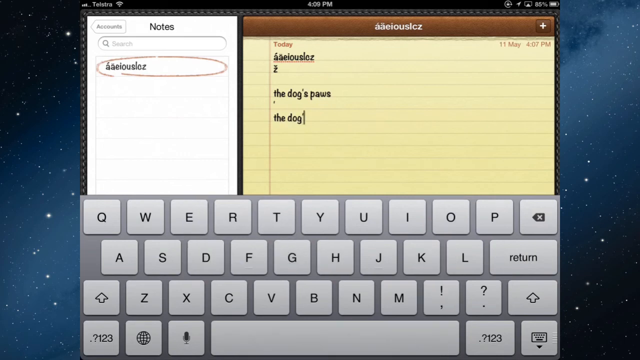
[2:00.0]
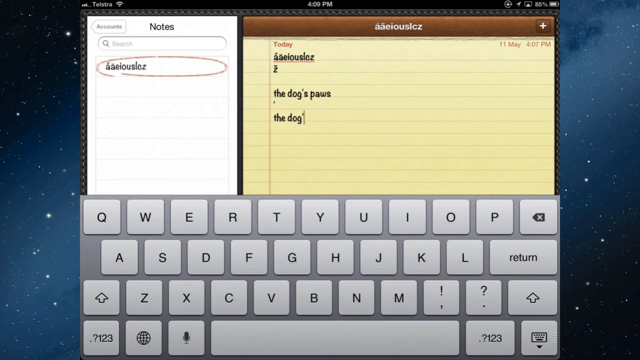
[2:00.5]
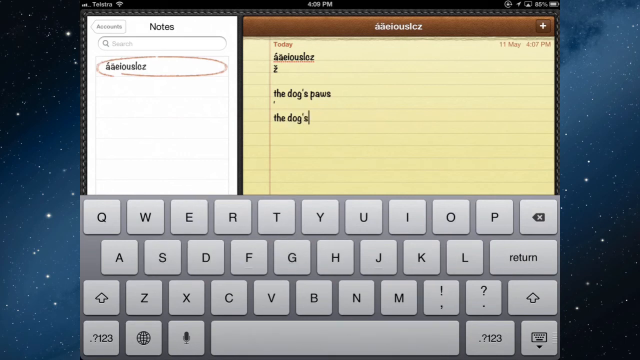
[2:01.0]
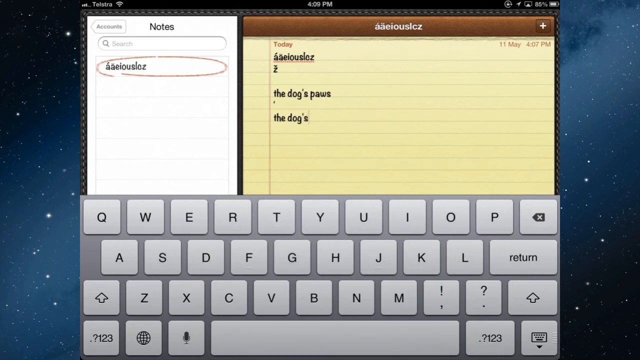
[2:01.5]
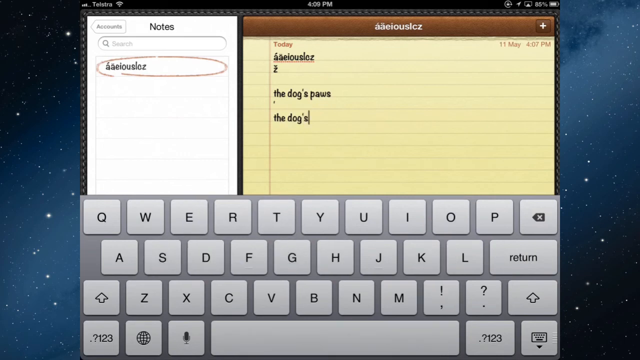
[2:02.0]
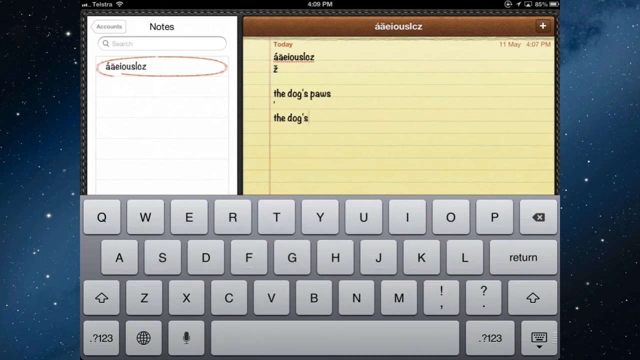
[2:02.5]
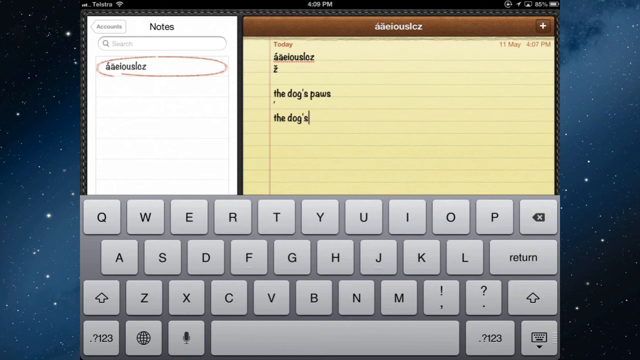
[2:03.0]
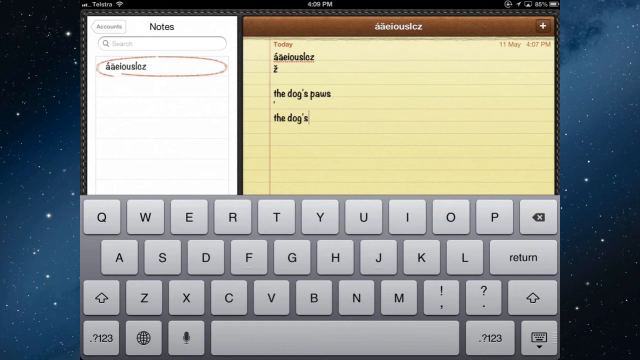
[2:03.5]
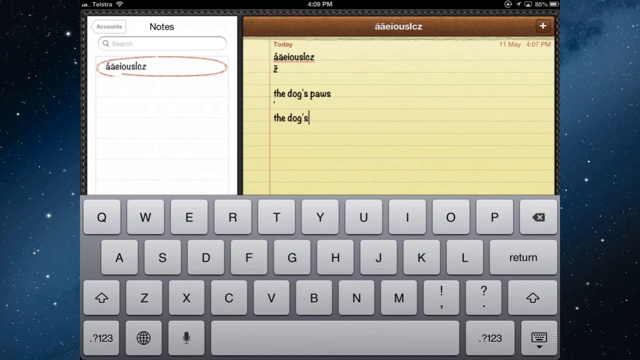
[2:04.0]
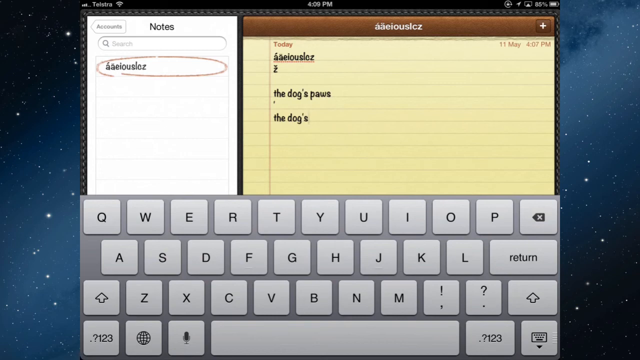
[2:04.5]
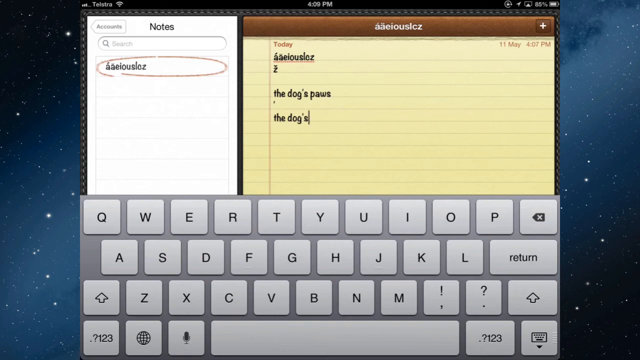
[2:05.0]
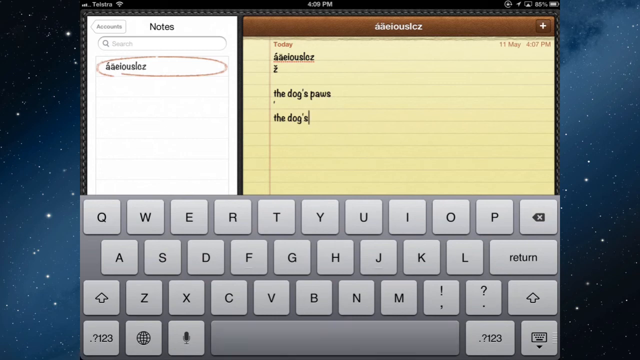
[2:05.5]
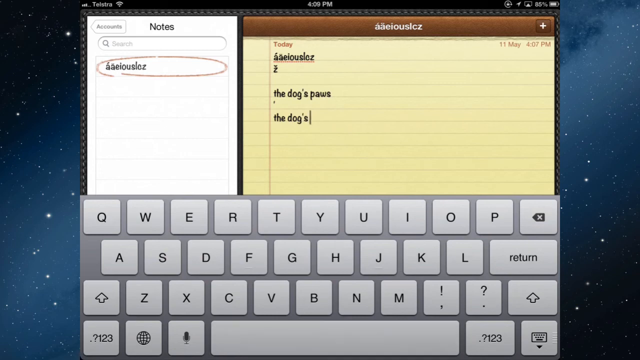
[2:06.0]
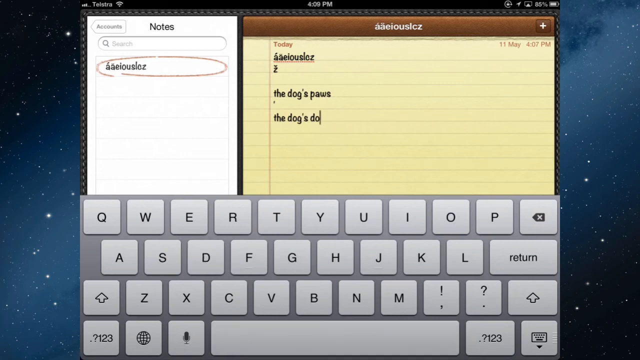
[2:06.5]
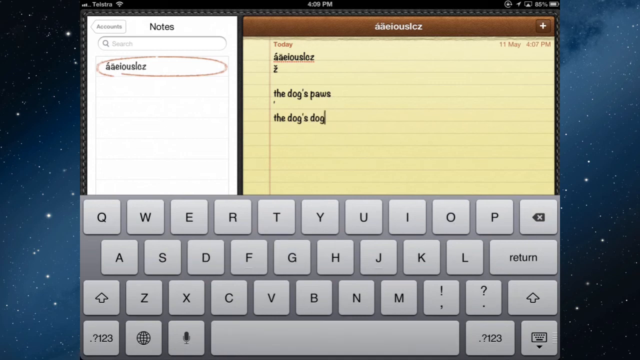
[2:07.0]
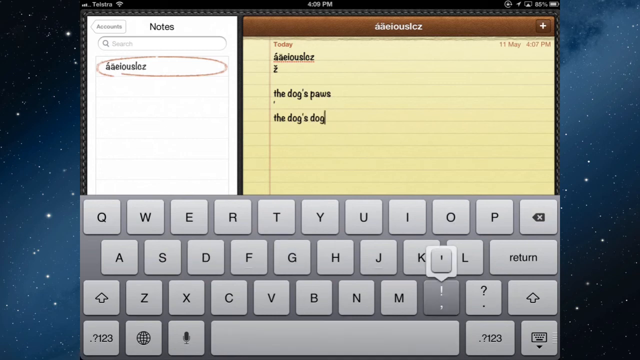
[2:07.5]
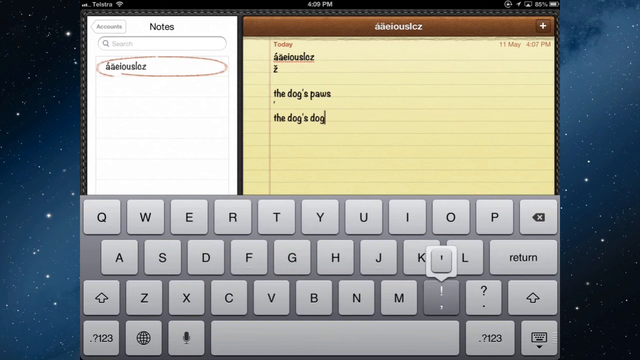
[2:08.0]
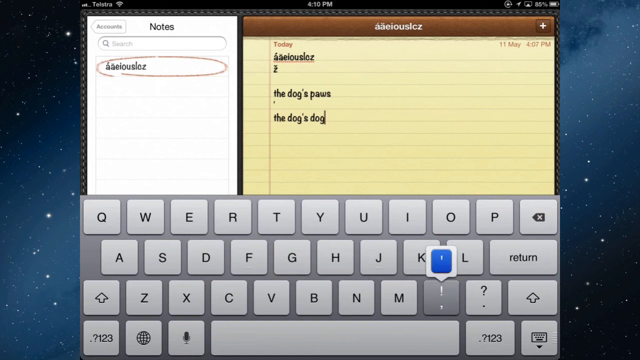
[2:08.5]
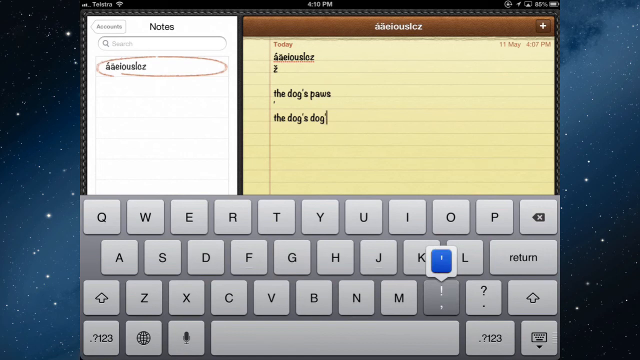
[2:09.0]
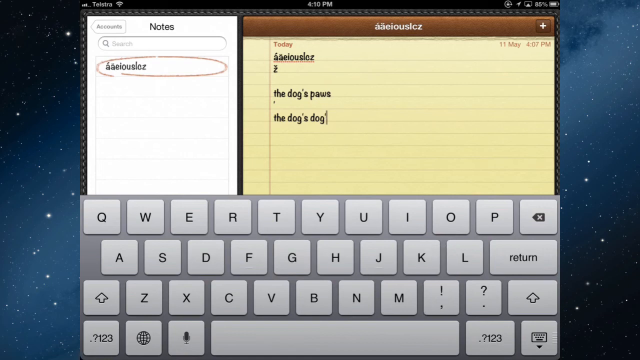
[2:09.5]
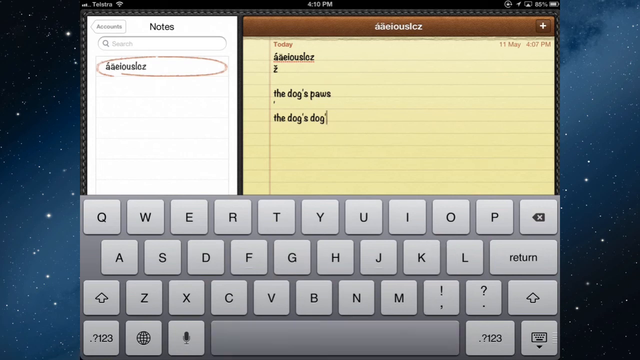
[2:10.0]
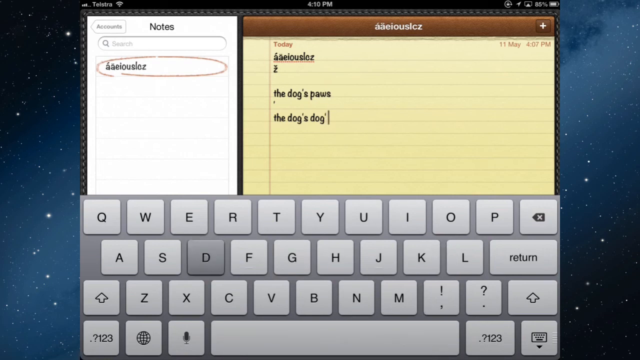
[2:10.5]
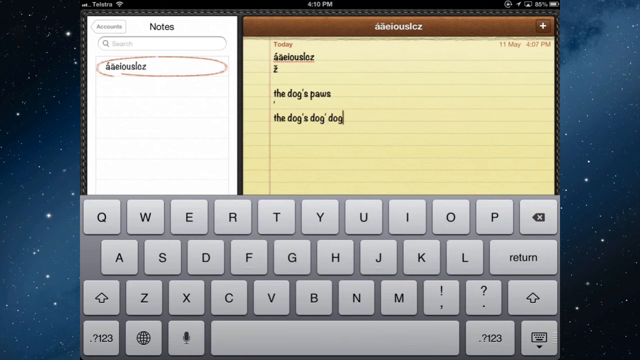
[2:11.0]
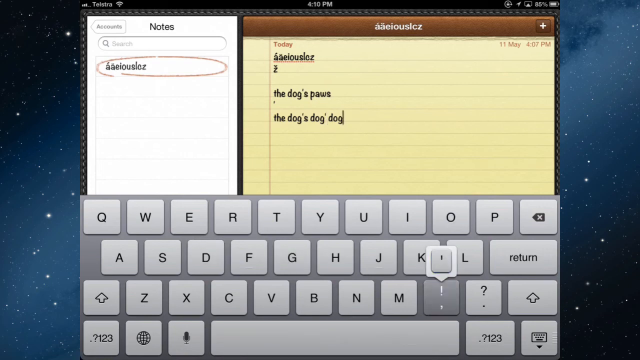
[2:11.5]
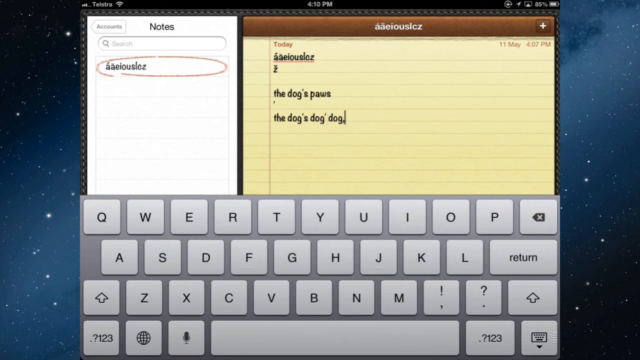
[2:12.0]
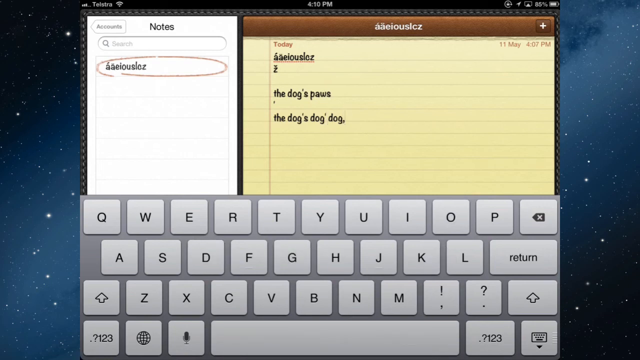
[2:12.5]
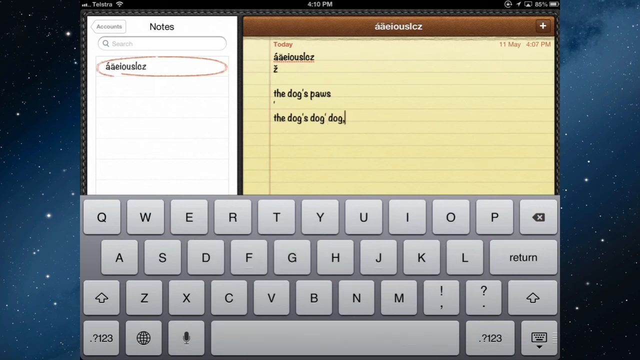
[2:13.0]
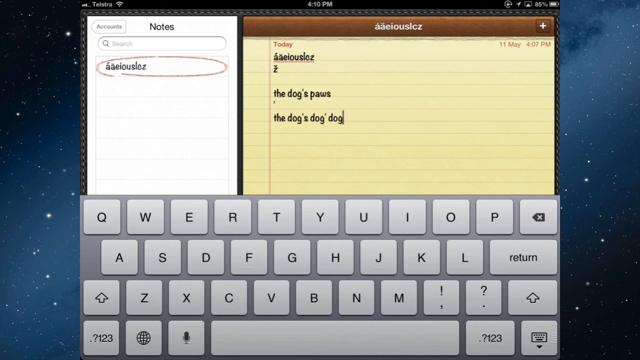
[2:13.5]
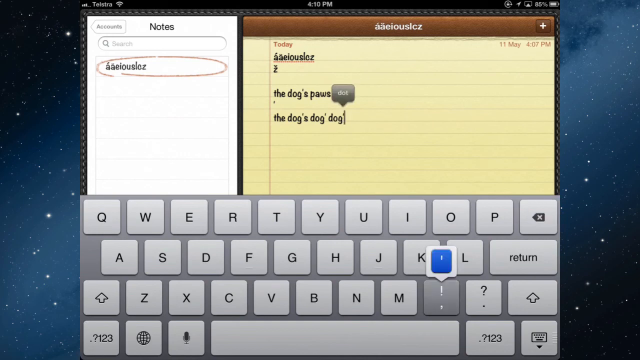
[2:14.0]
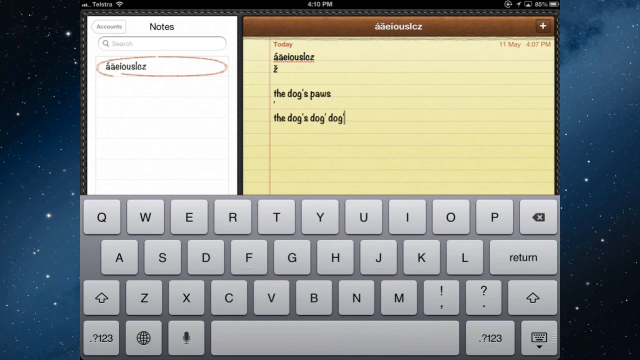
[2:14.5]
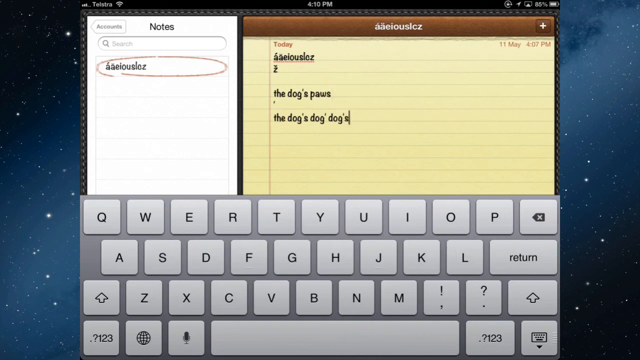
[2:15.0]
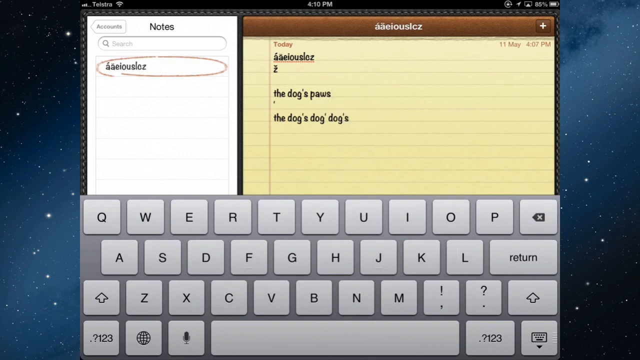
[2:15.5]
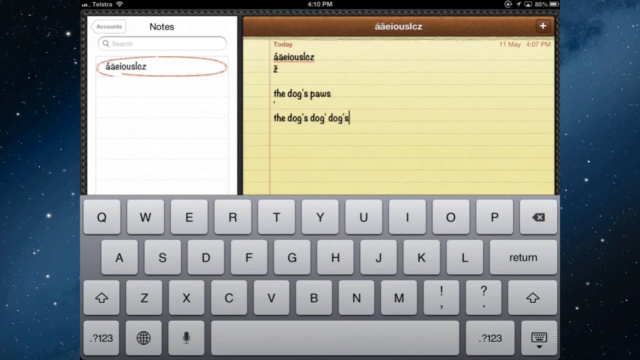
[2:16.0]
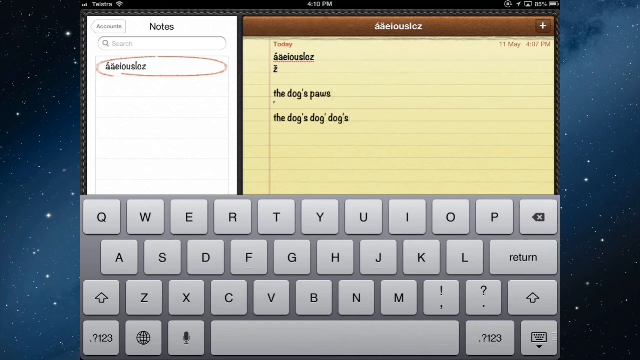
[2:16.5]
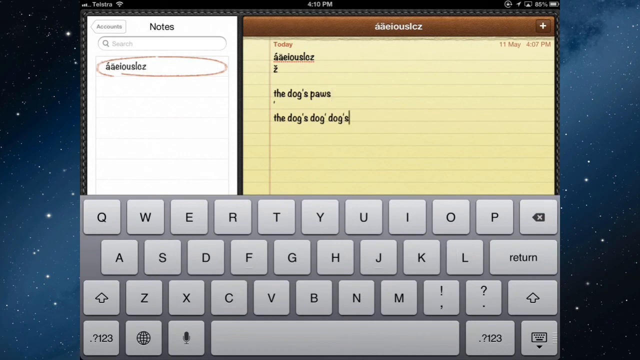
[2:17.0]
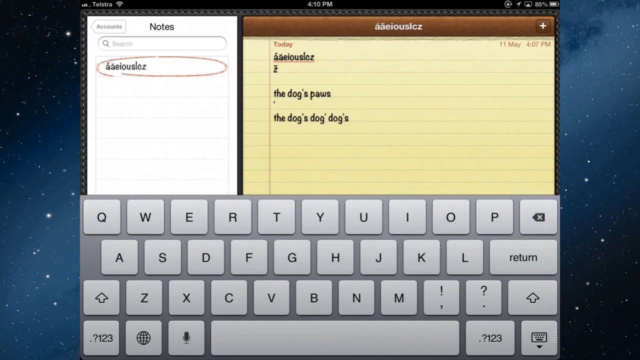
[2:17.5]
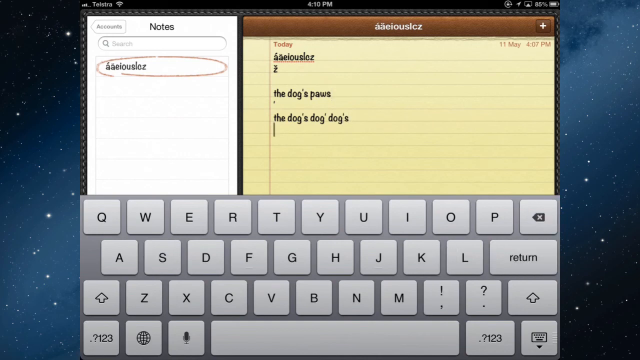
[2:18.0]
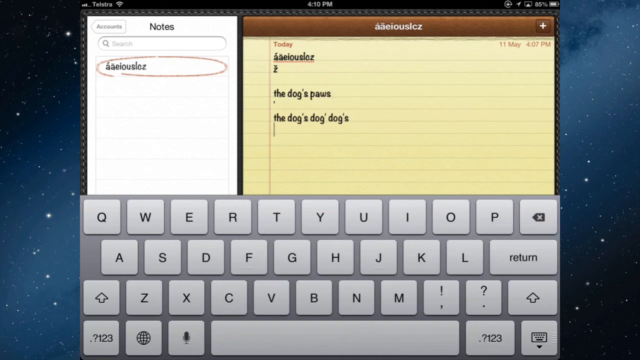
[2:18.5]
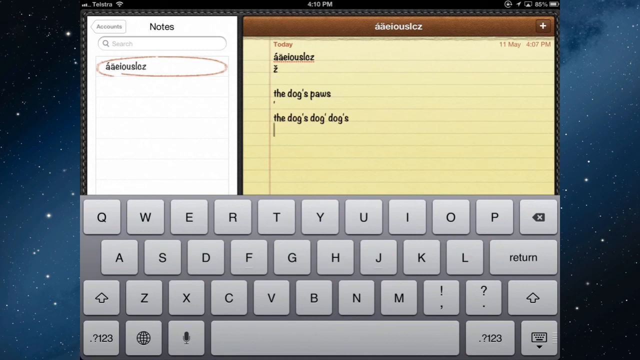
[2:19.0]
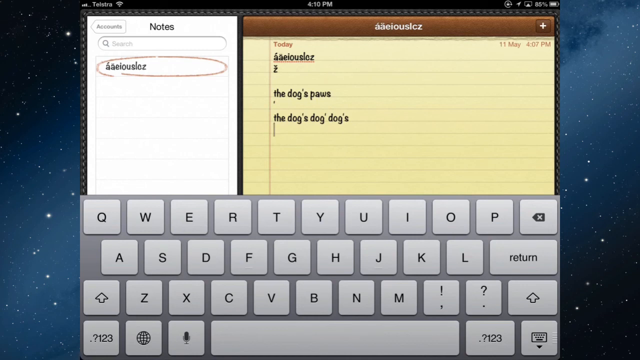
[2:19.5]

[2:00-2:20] A computer-generated yellow notepad with a brown top border bearing some white text is shown, with black text being written underneath by the user. On the left is a smaller notepad with white pages and a black header reading "notes," and a gray keyboard is at the bottom of the screen. Two lines on the yellow notepad contain words: the first reads "the dog's paws," and underneath it reads "the dogs" with the cursor blinking. The user continues typing "dog," "dog," and then an apostrophe s, then clicks return and goes down to the next line. Whenever a key is selected during typing, its gray turns a darker gray.